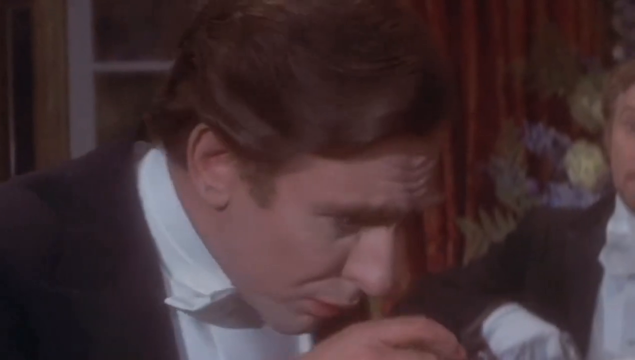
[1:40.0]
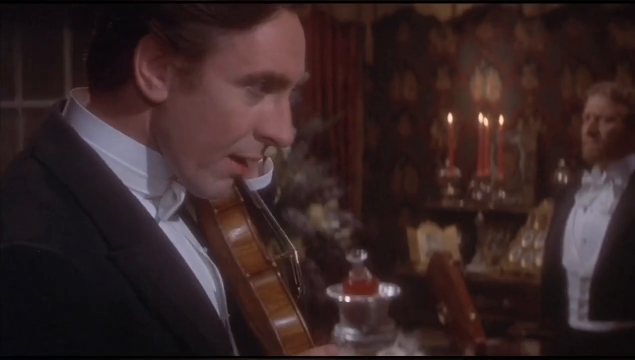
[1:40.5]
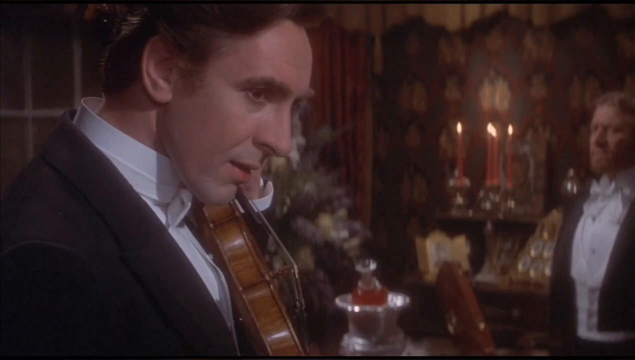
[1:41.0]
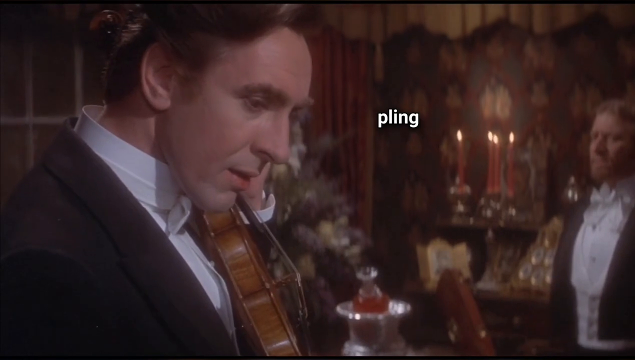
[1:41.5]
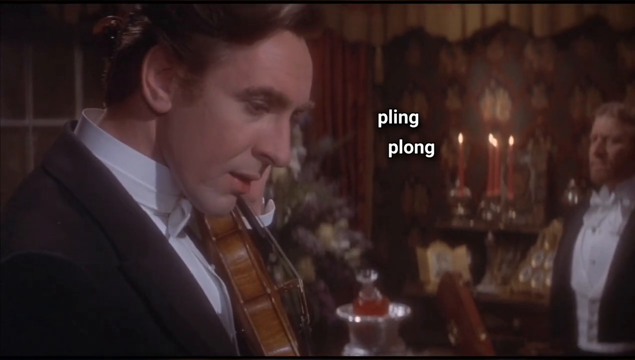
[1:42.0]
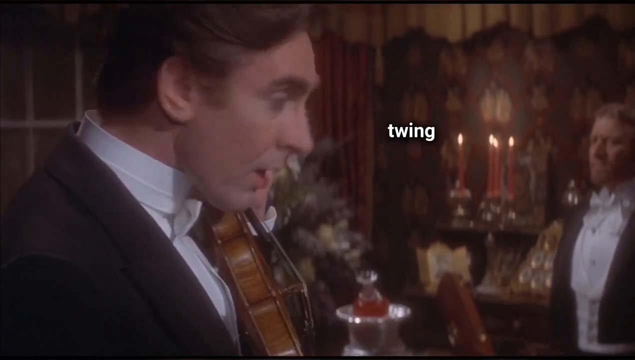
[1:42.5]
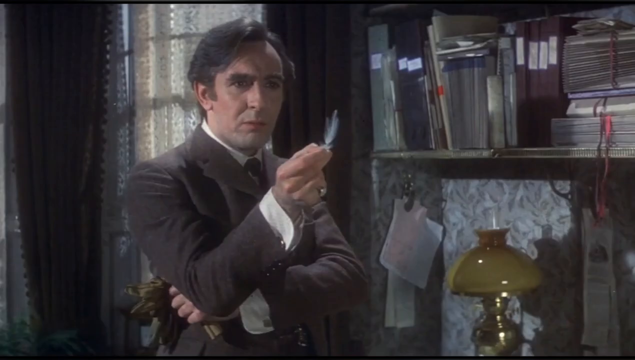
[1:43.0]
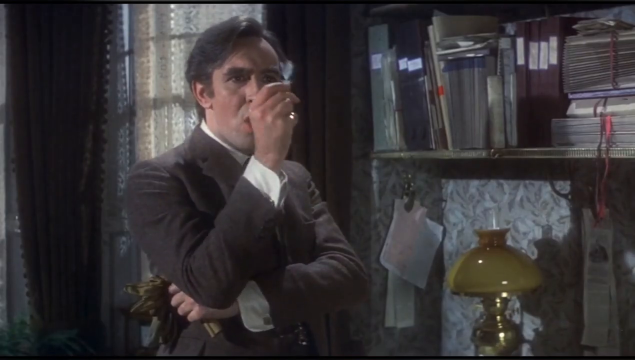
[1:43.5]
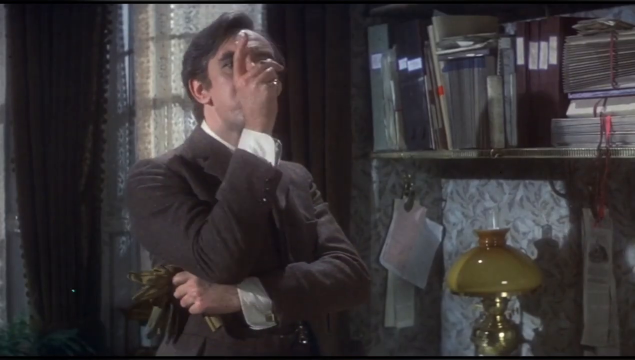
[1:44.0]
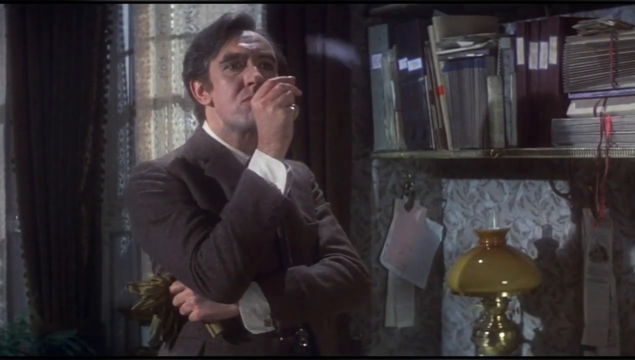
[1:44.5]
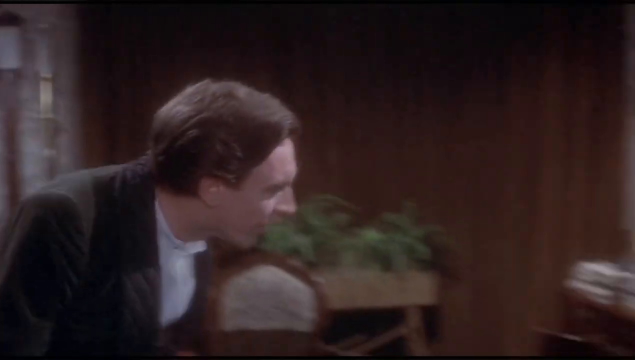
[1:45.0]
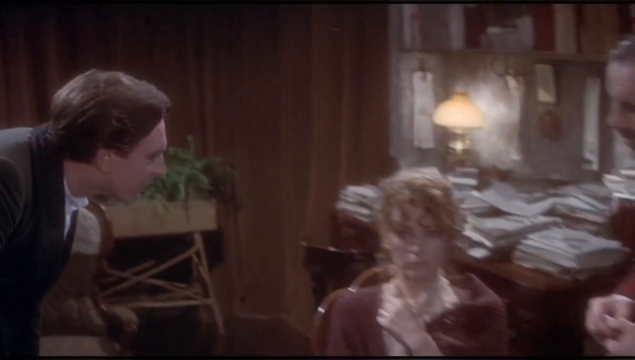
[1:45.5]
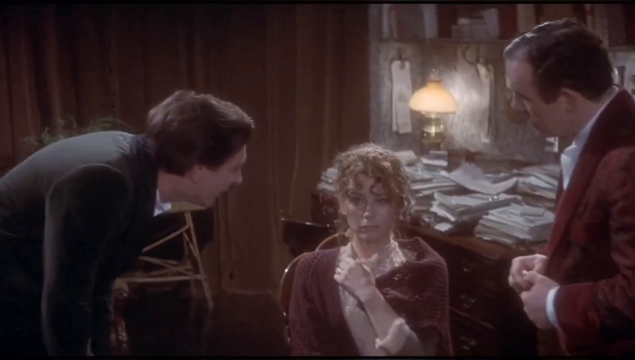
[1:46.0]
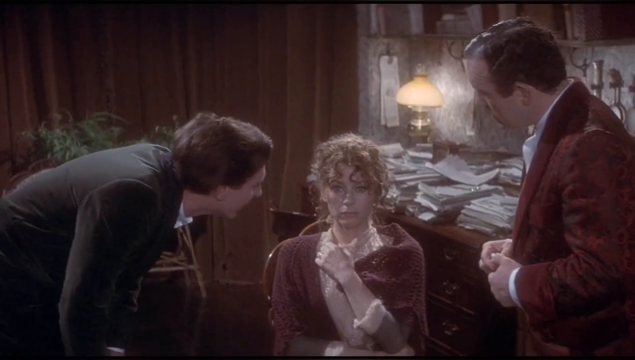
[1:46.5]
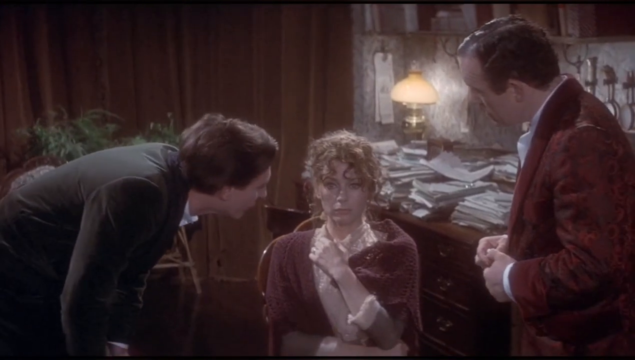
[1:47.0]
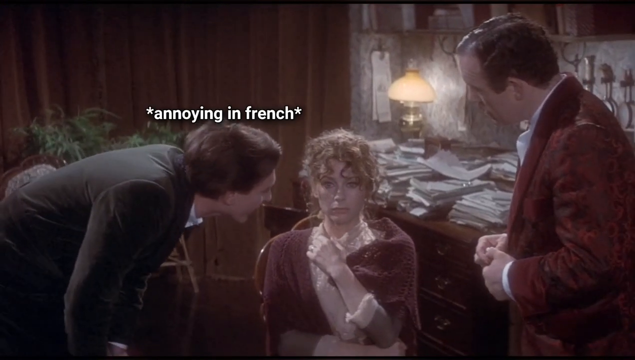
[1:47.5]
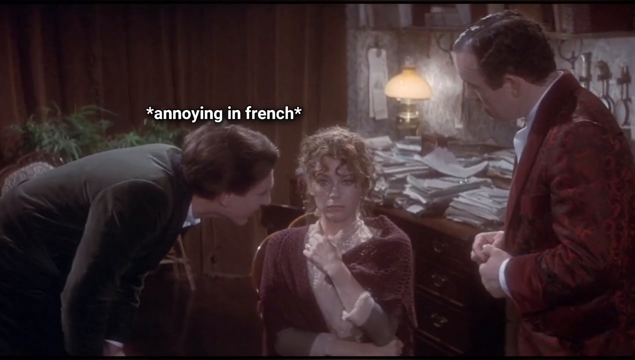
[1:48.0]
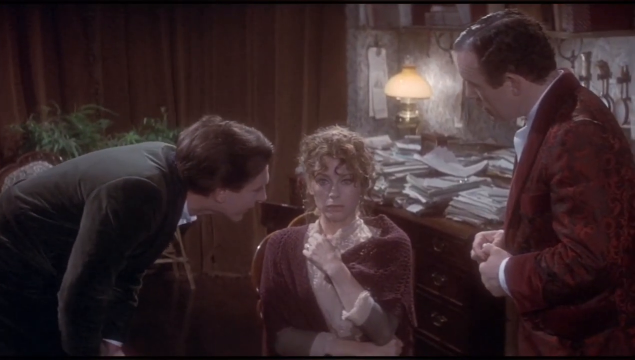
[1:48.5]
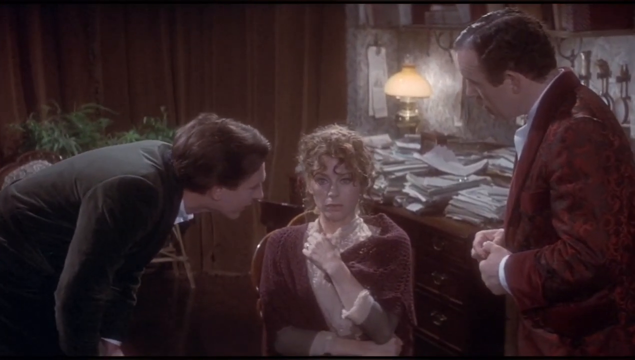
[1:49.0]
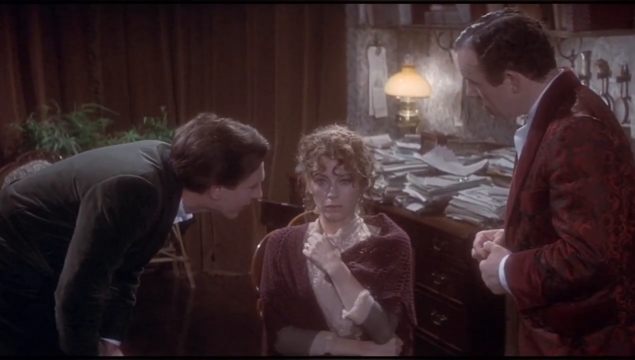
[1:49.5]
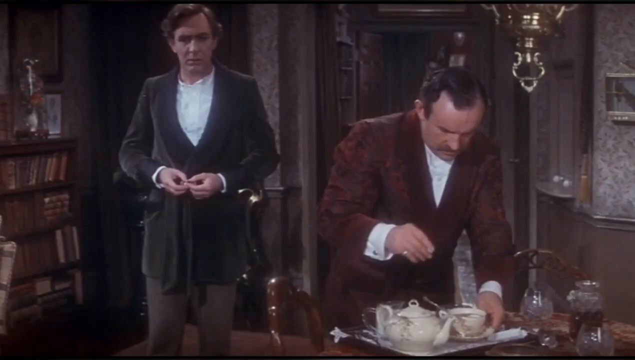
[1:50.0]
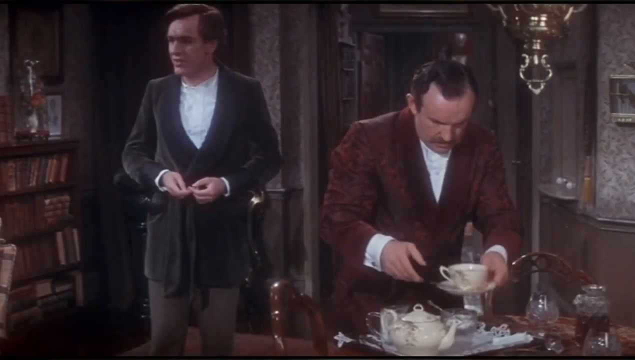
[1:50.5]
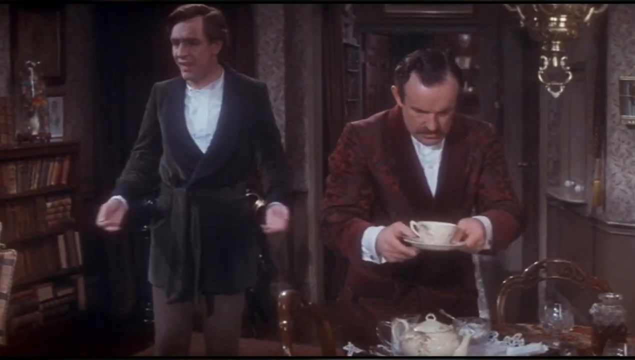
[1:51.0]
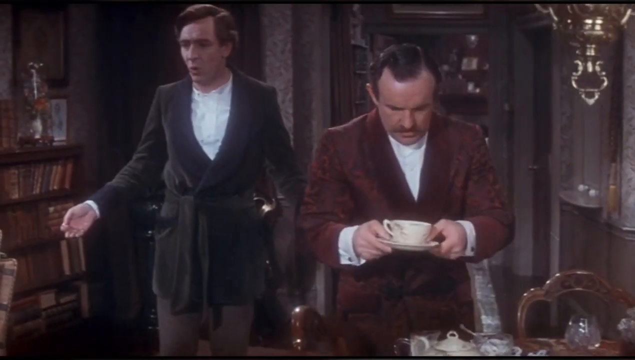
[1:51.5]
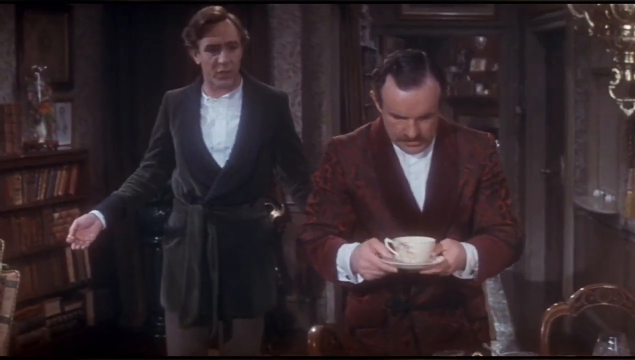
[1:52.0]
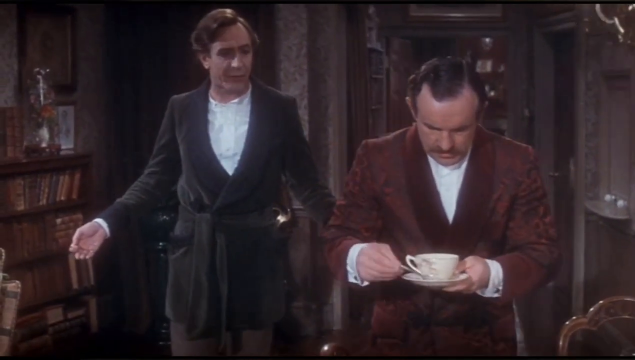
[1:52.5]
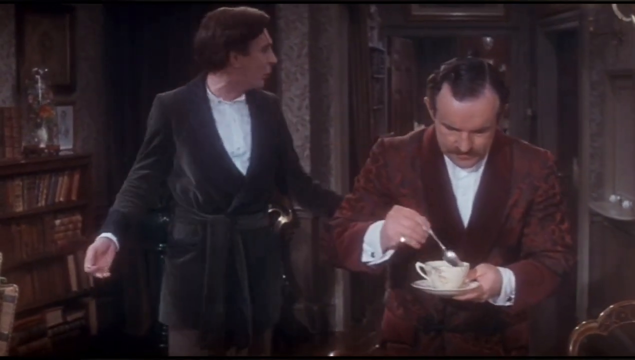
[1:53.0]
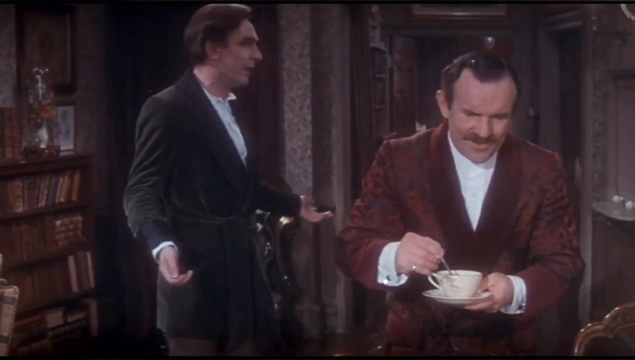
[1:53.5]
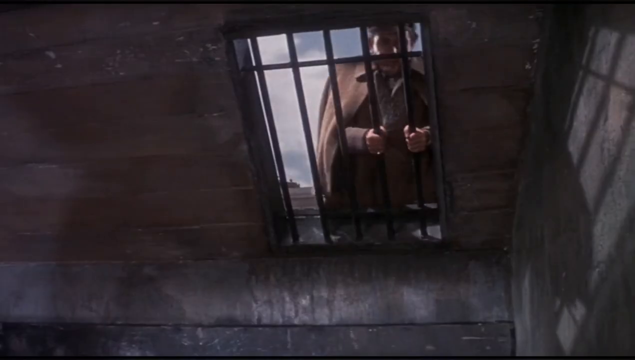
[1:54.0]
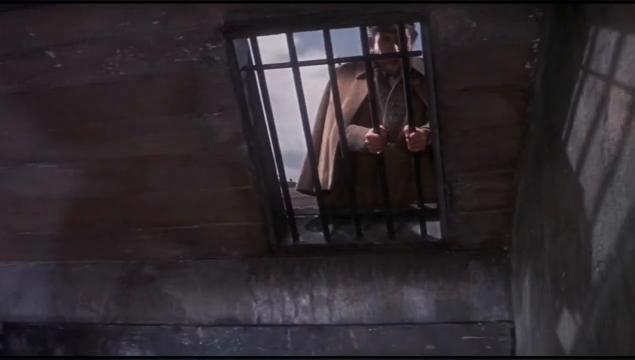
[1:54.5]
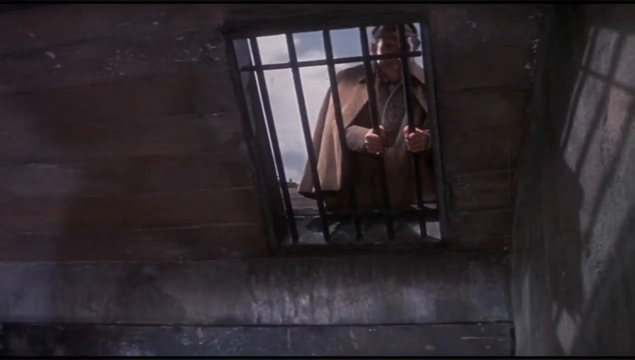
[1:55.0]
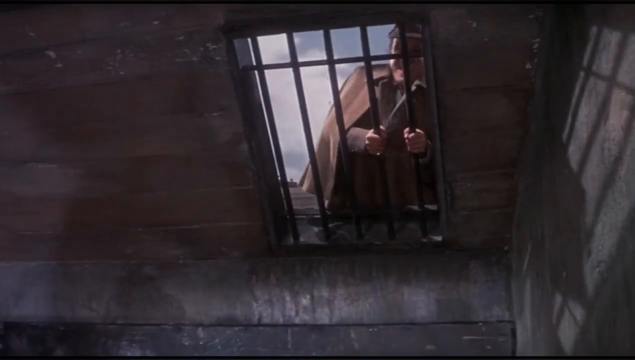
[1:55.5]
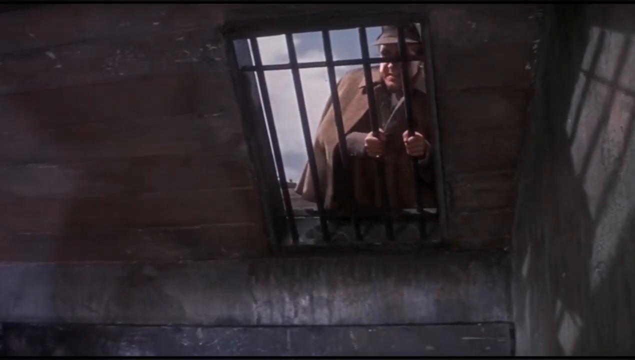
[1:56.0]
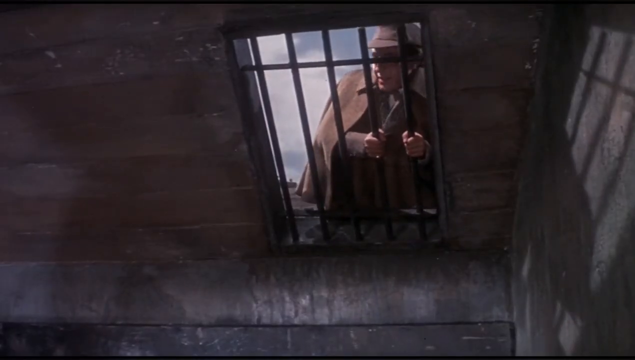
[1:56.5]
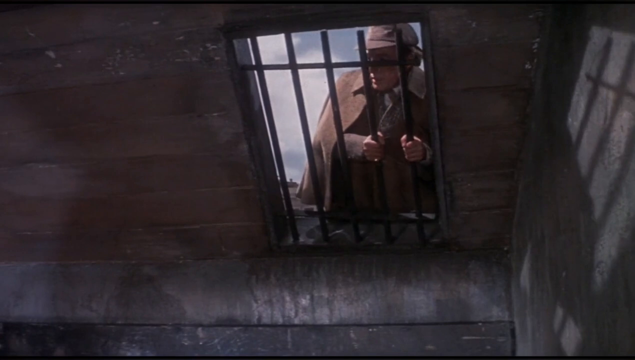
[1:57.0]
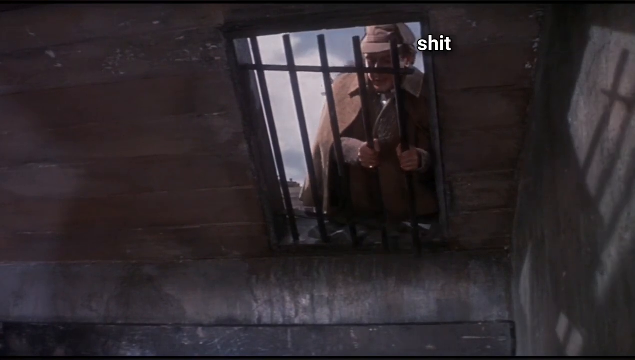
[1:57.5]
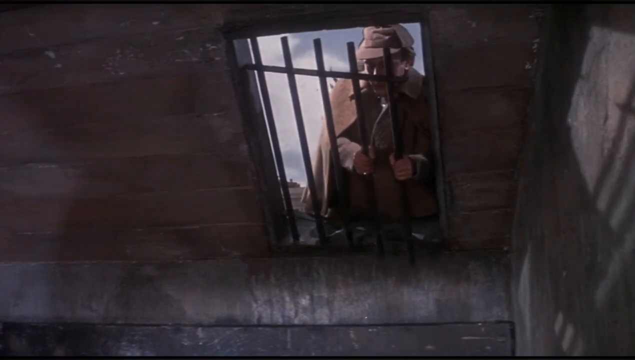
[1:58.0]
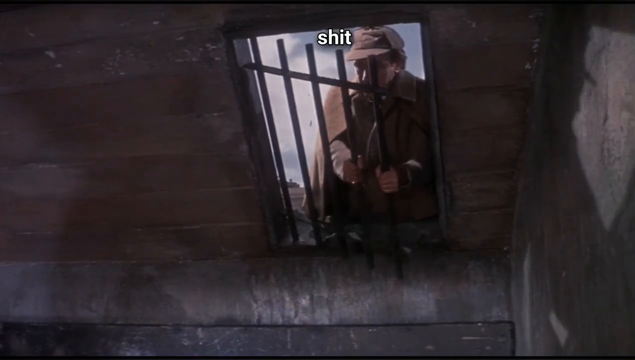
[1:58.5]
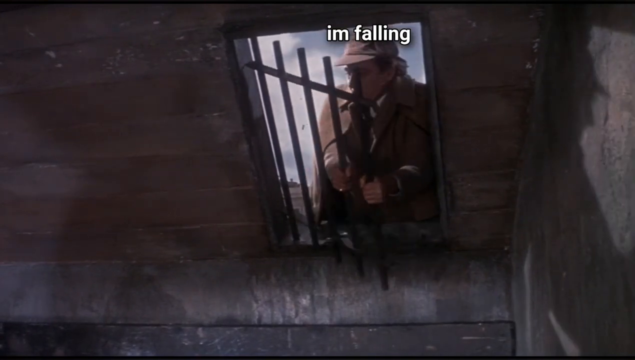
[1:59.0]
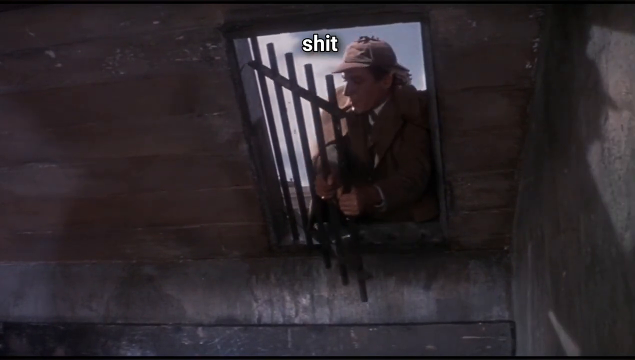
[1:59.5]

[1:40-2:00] An older white man in a dress shirt and a black jacket holds a violin in some type of room. They also talk to a red-haired woman who sits in a chair and looks confused. The men then appear in what looks like a library-type room, with a bookshelf of old-style books on the left and a vase on the bookcase; the room seems to have lots of decorations on the wall. The taller gentleman with brown hair wears a green robe over a white shirt. The gentleman with black hair wears a red robe over a black shirt and holds a saucer and teacup, stirring something in the cup with a silver spoon. The taller gentleman, back in his beige trench coat and detective hat, tries to open a window screen made of wrought iron bars.